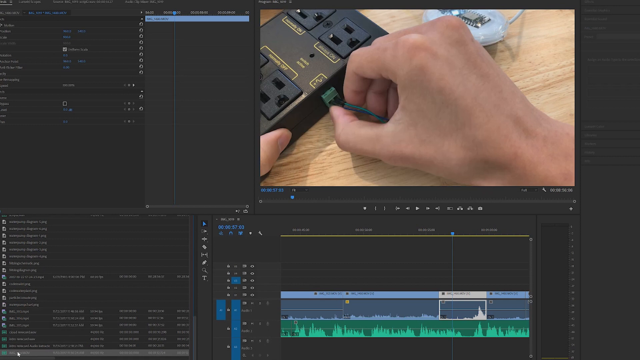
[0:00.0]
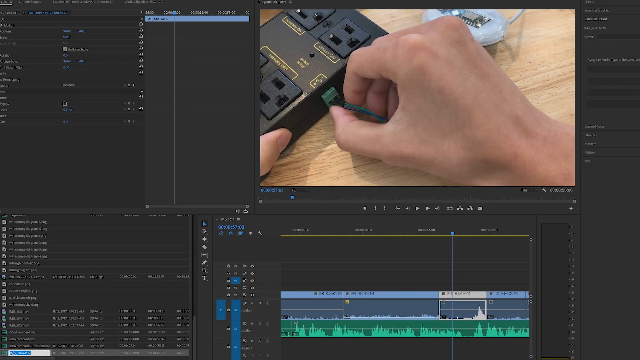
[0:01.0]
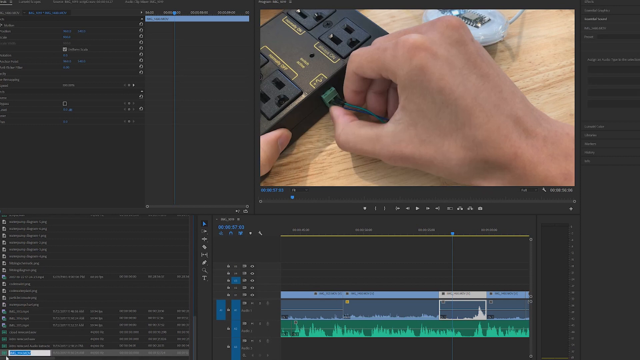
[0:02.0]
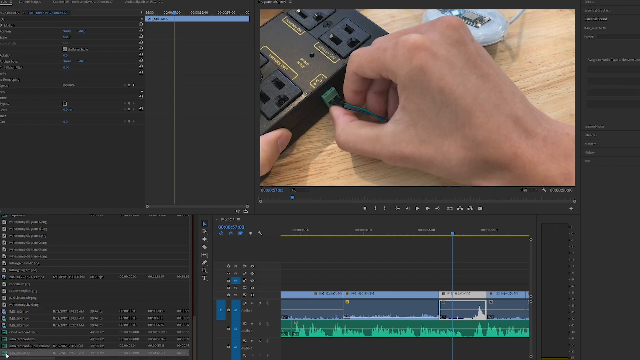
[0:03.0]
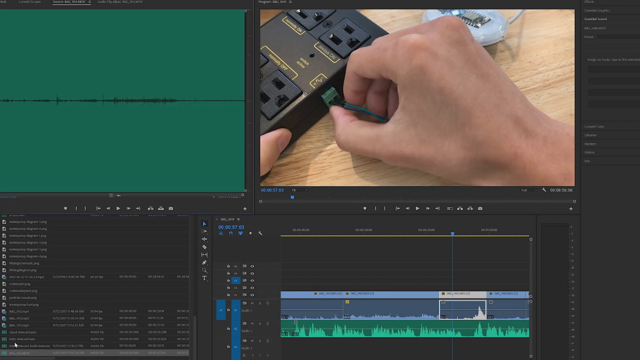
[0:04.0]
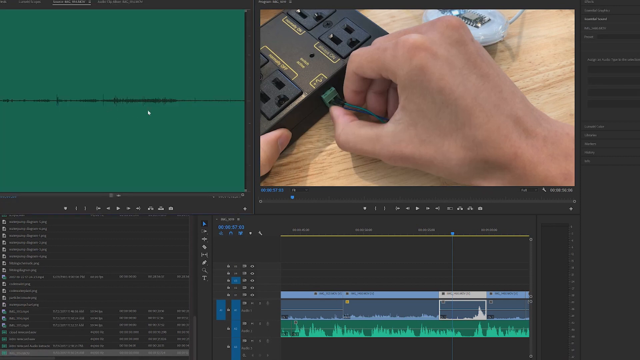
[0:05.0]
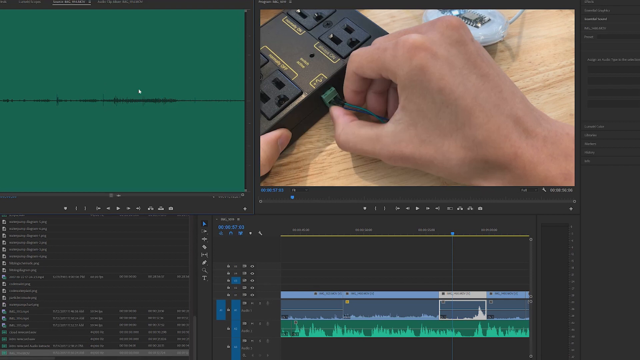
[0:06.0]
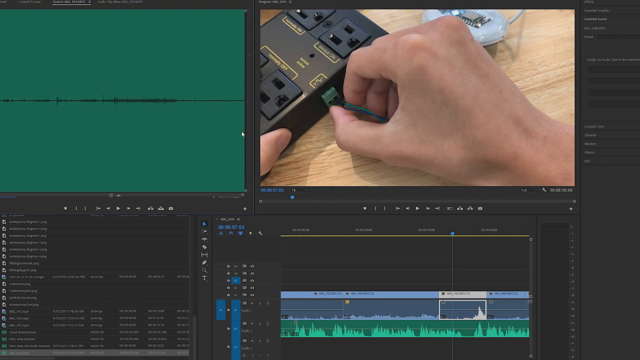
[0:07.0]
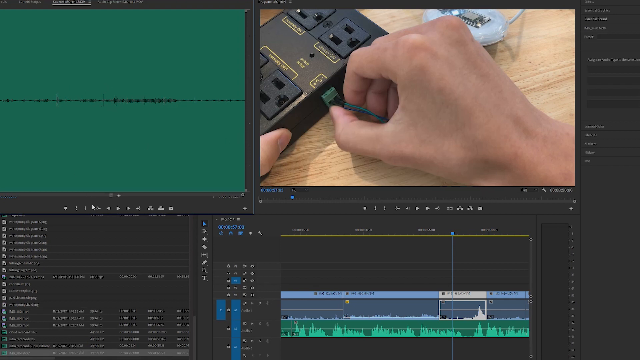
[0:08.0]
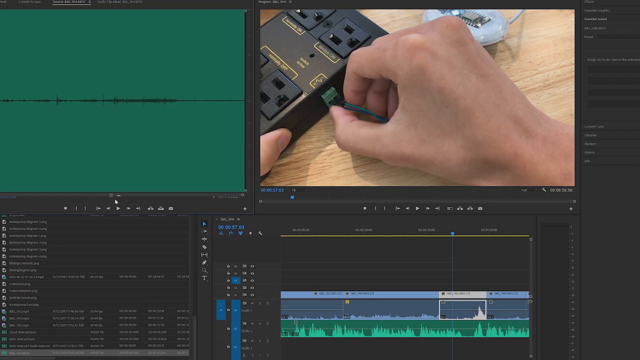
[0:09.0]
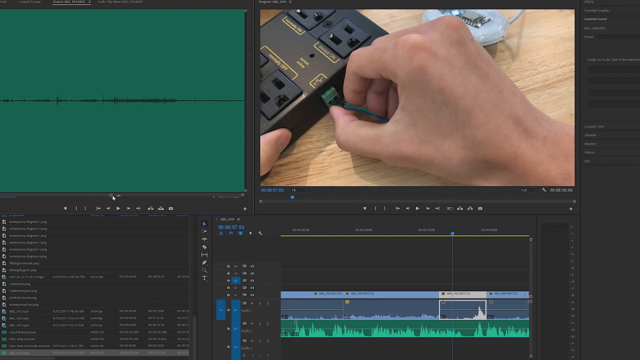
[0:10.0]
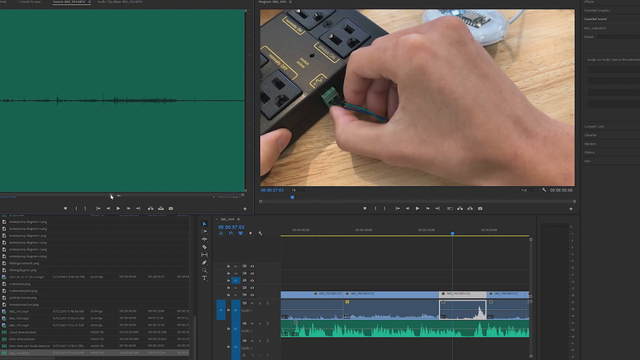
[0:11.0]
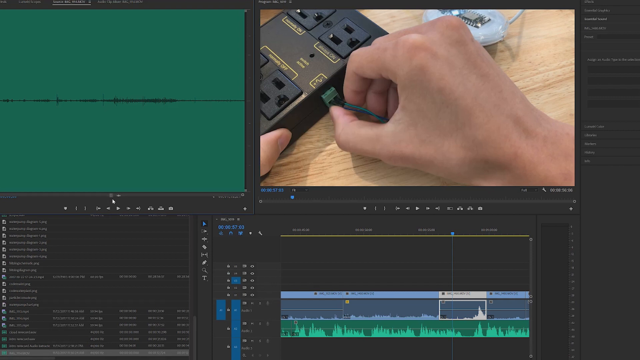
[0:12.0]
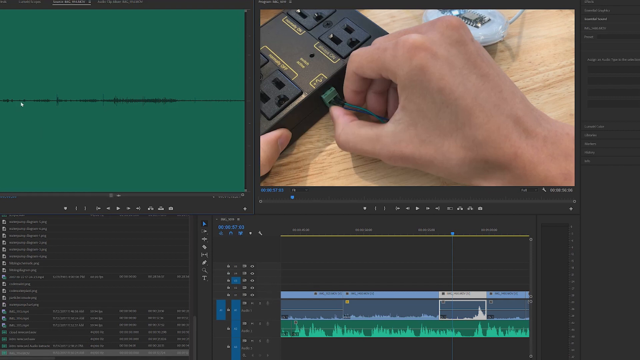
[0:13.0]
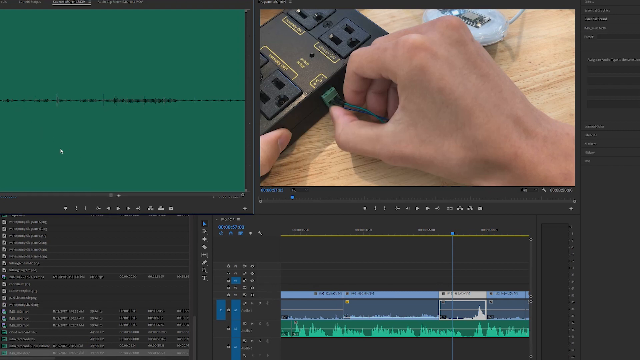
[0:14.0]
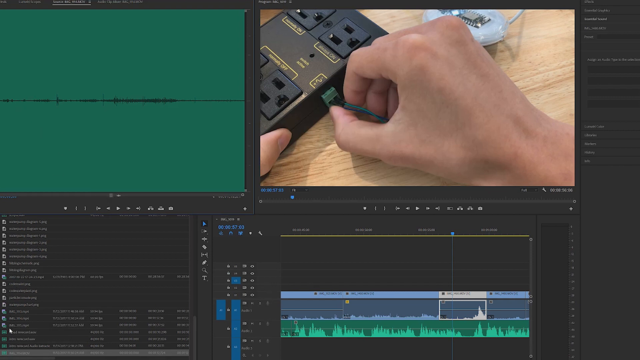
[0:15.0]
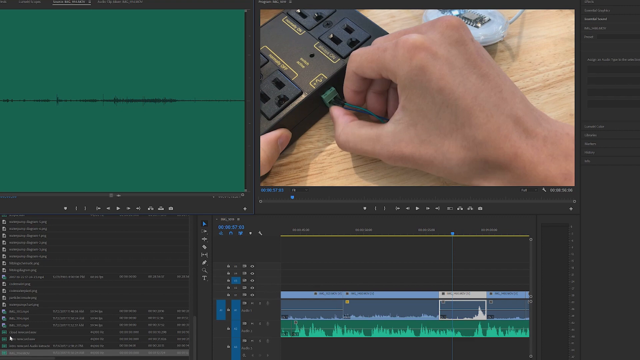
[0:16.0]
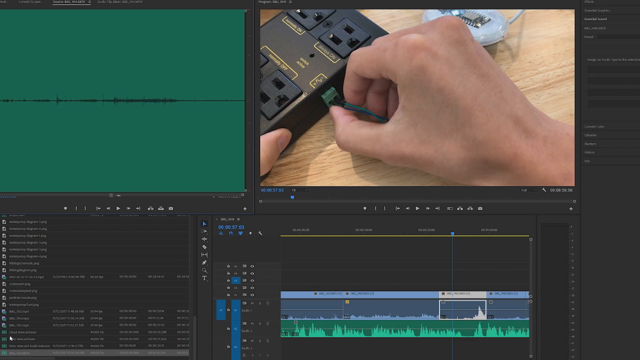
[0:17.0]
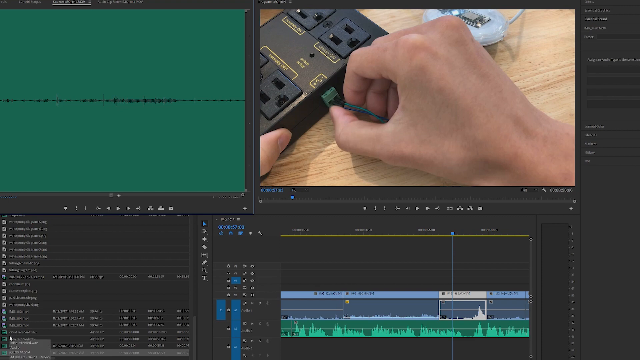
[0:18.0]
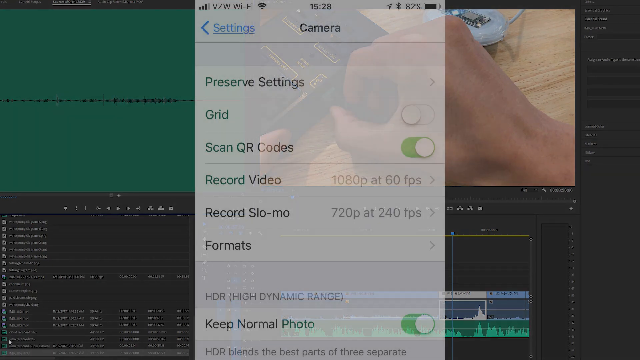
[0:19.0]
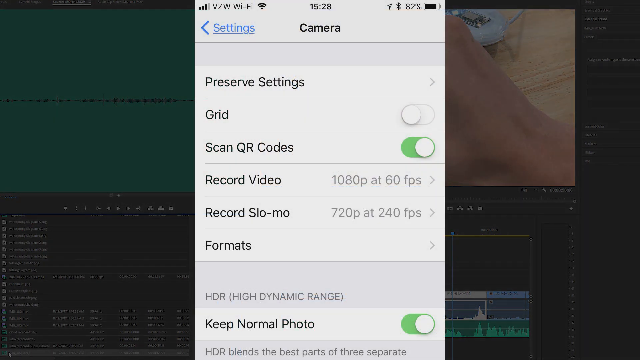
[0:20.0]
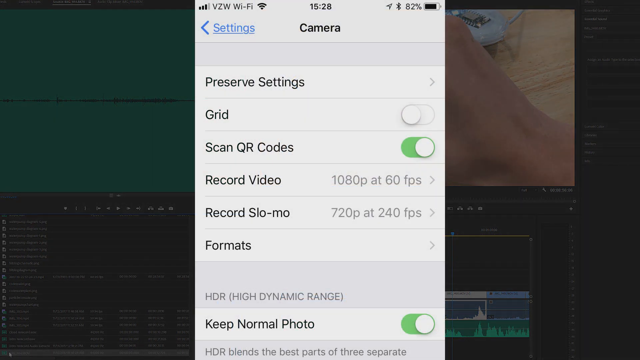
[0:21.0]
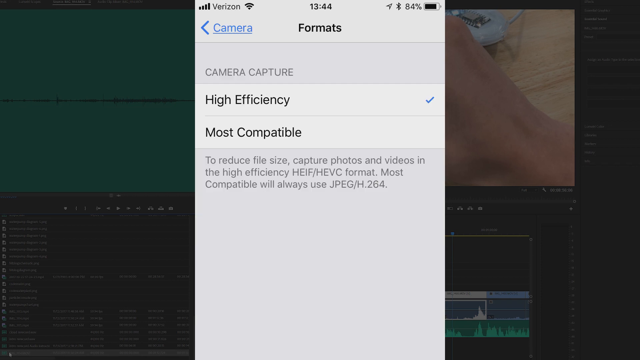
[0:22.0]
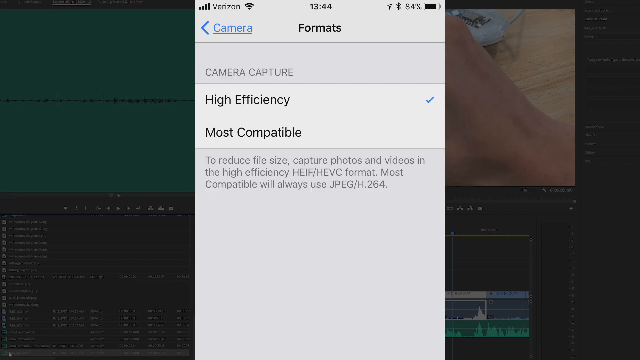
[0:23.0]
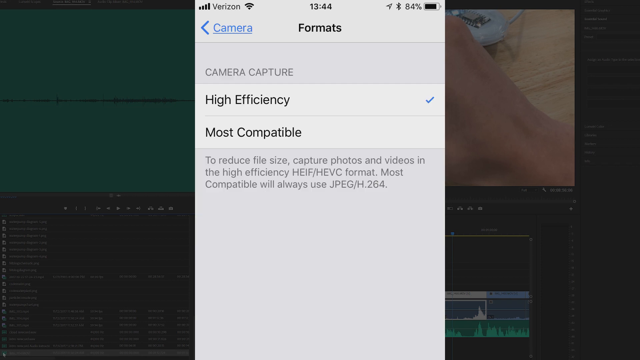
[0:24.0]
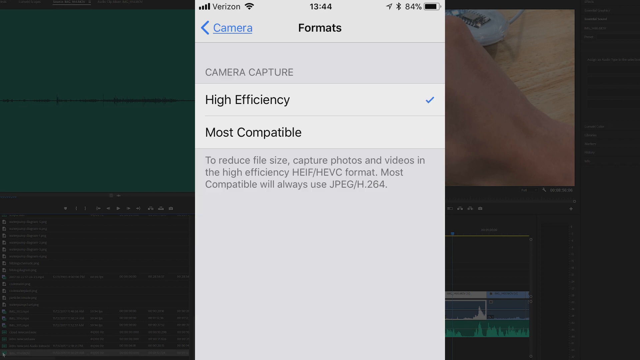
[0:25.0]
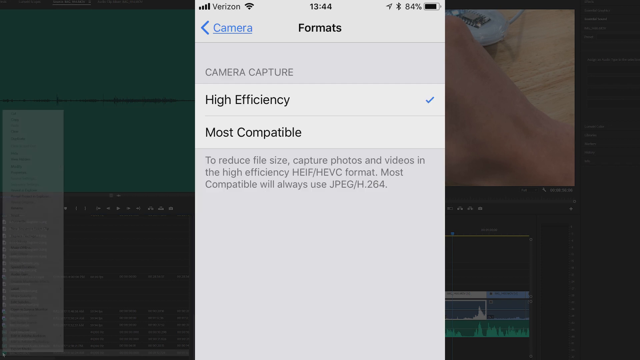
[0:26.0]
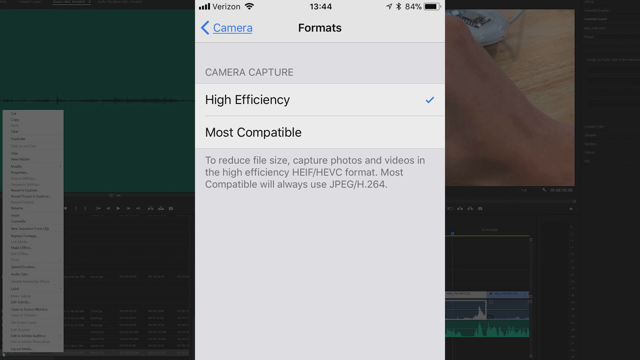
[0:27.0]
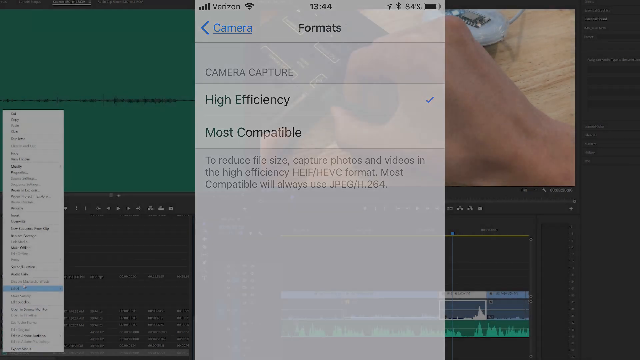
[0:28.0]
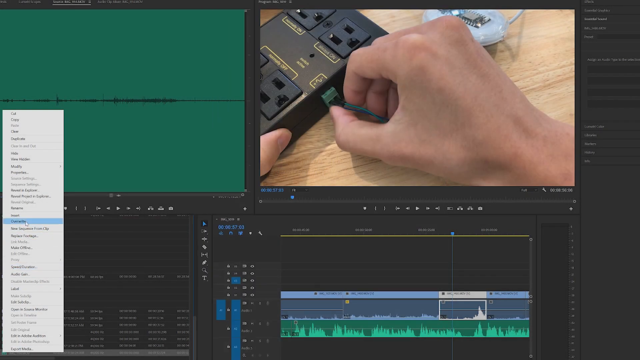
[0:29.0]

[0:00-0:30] A white person's arm holds a green cable, trying to fix it into a socket; there appear to be four spaces. A sky blue cable that looks like a mouse is to his right side. There is a screen that is black in color, with a small portion of it green, and the cursor moves up and down there. Text on the screen includes "record video", "record slo-mo", "high-efficiency", "most compatible", "to reduce file size" and "capture photos and videos in high-efficiency", with "HEIF" and "HEVC" formats, and "most compatible will always use JPEG"; "camera formats" and "camera capture" also appear. The white person's hand is static, not moving at all. The battery level shows 84%, Bluetooth is on, and the time on the screen shows 13:44.